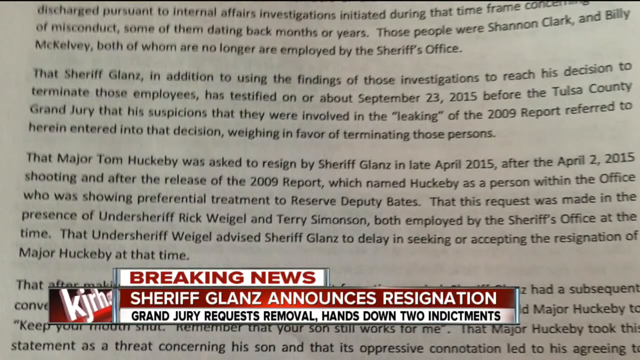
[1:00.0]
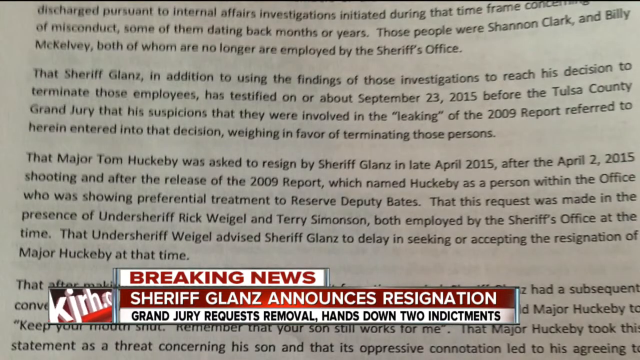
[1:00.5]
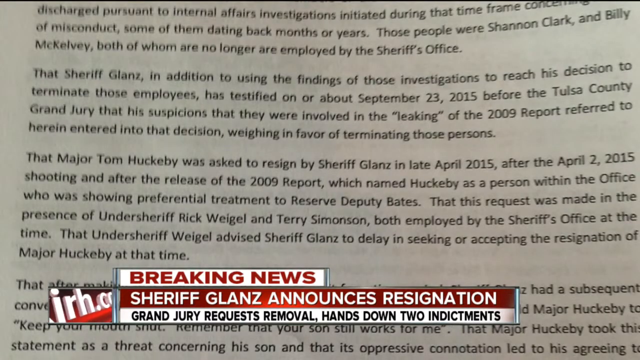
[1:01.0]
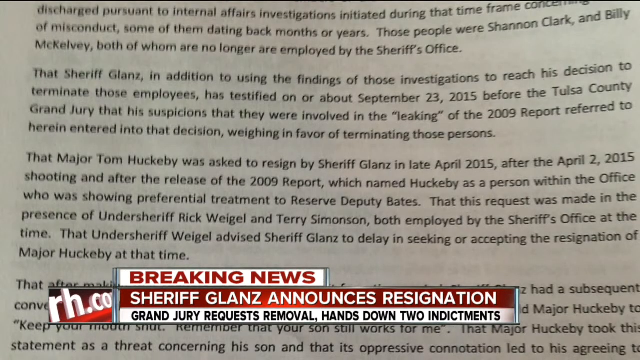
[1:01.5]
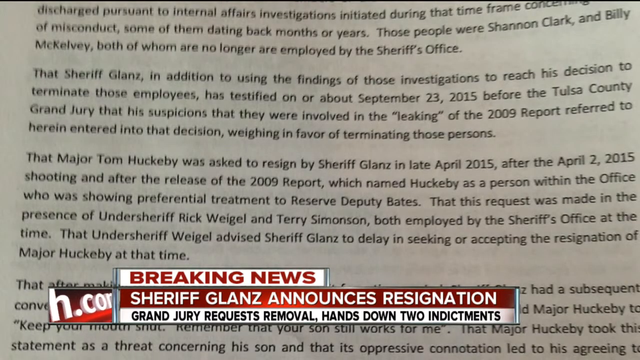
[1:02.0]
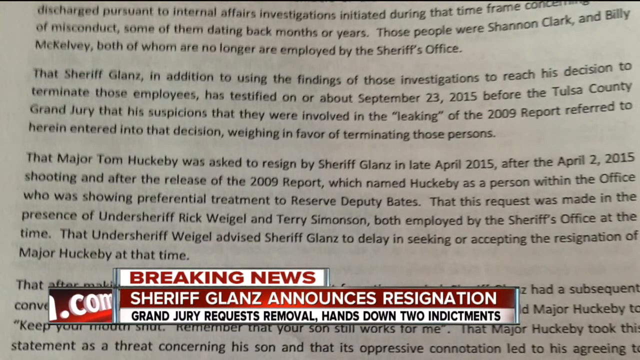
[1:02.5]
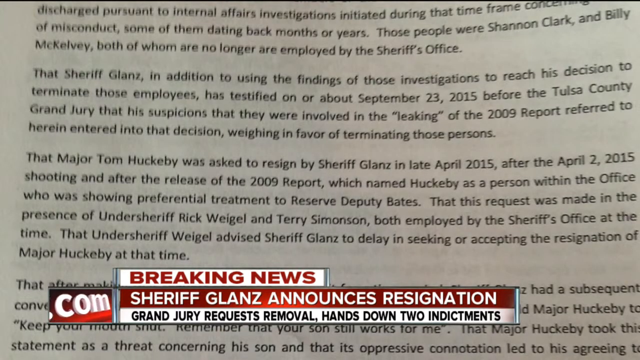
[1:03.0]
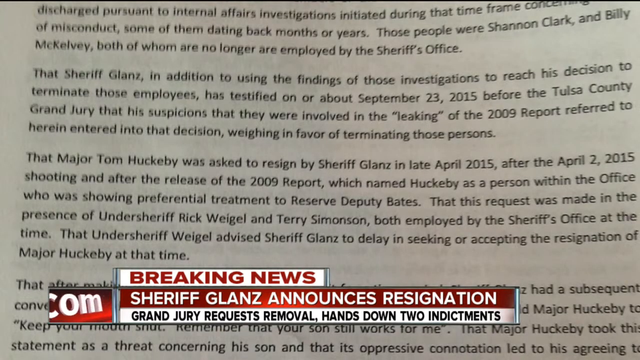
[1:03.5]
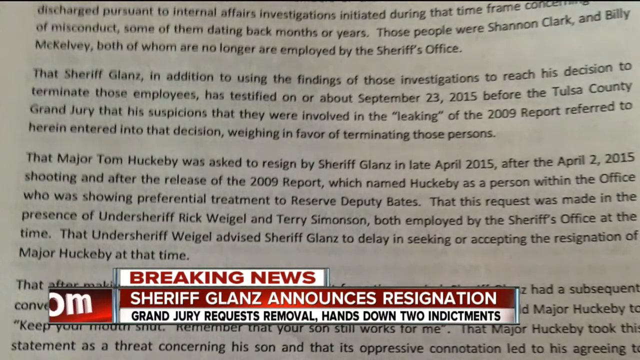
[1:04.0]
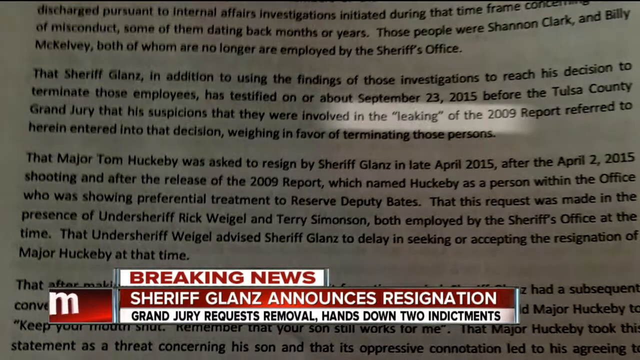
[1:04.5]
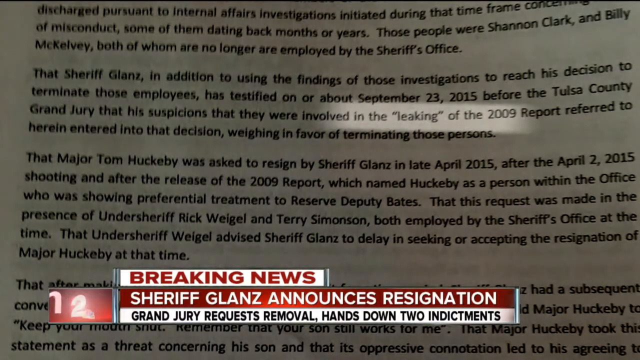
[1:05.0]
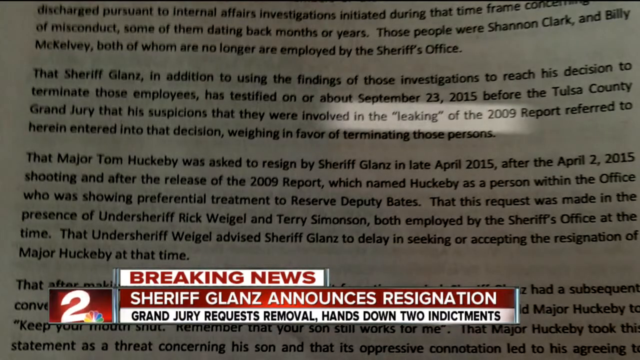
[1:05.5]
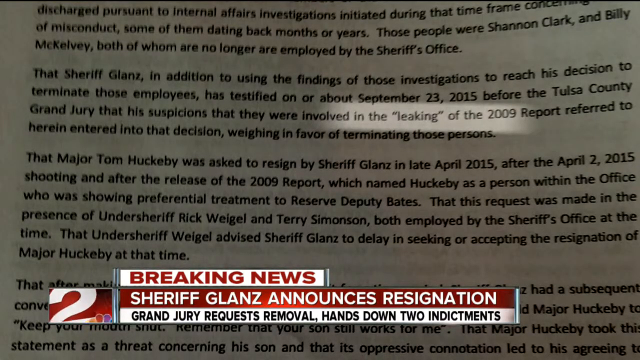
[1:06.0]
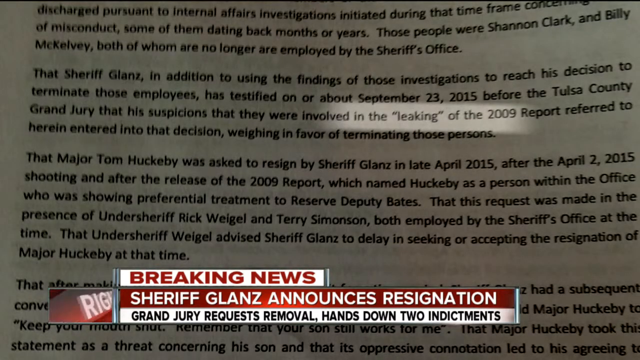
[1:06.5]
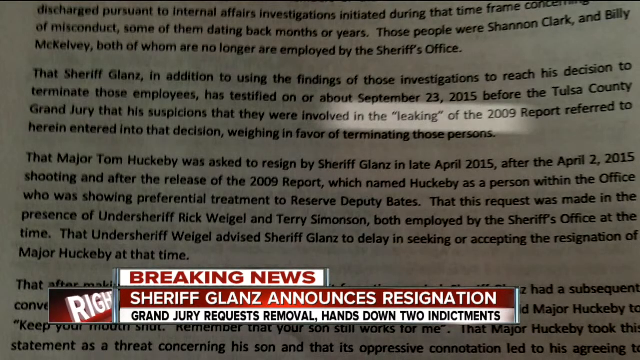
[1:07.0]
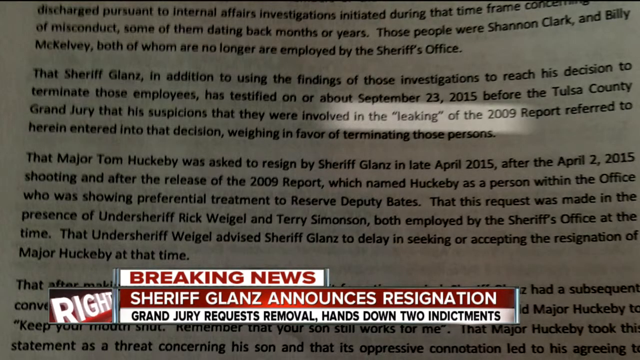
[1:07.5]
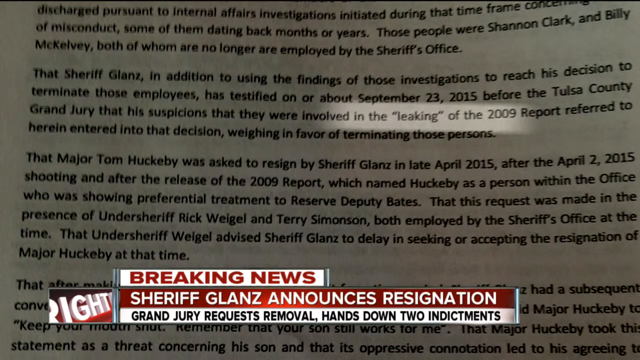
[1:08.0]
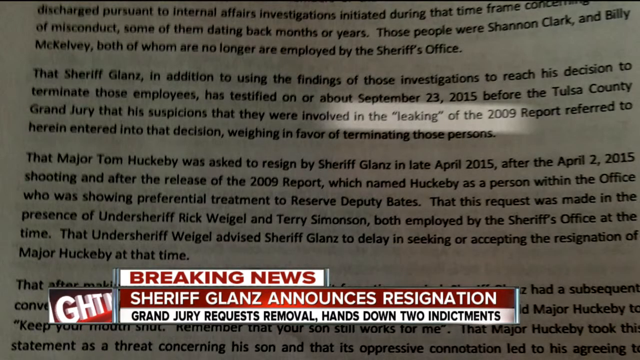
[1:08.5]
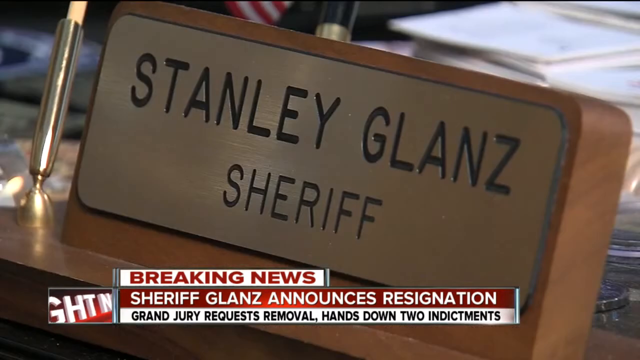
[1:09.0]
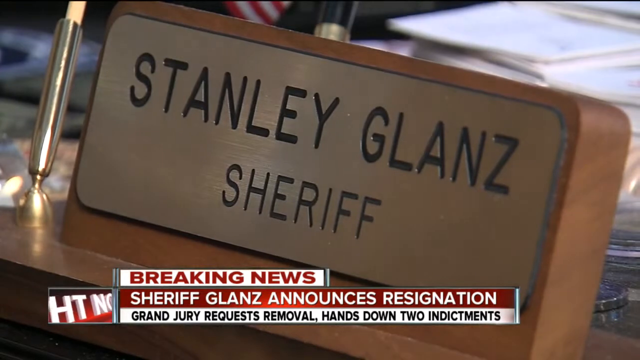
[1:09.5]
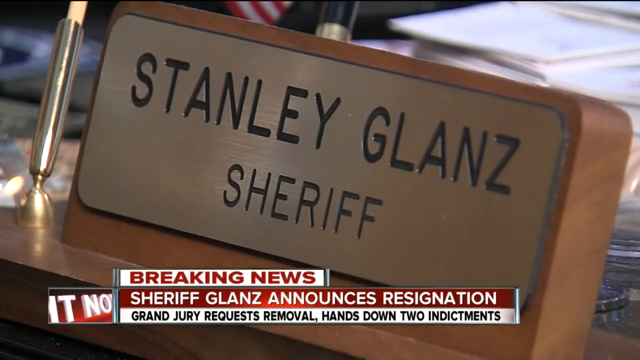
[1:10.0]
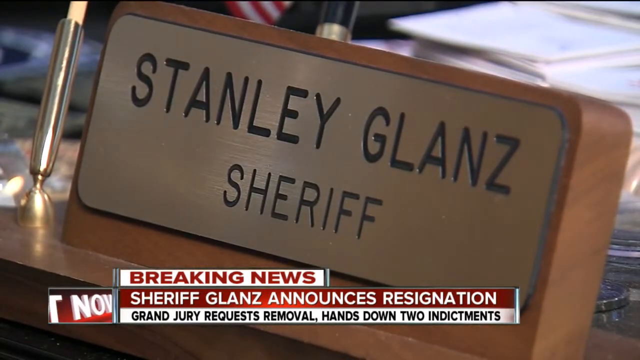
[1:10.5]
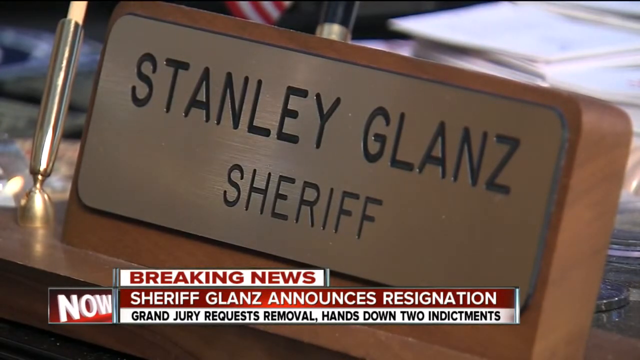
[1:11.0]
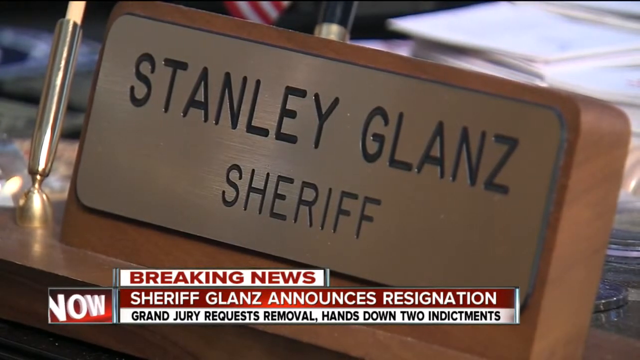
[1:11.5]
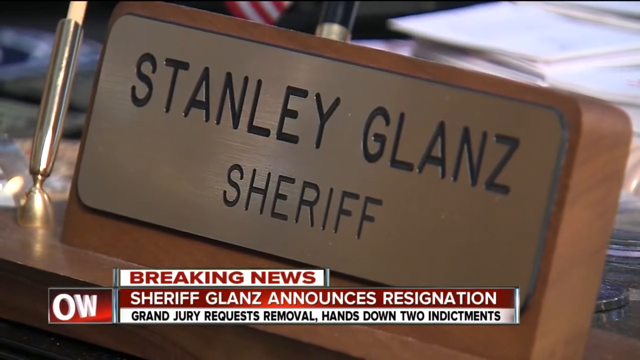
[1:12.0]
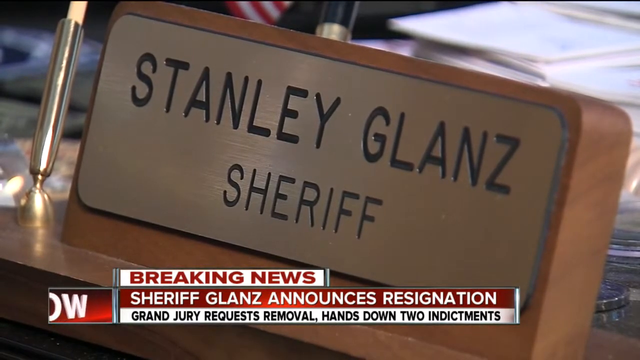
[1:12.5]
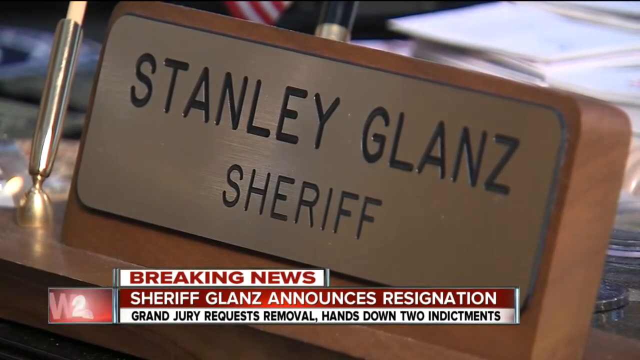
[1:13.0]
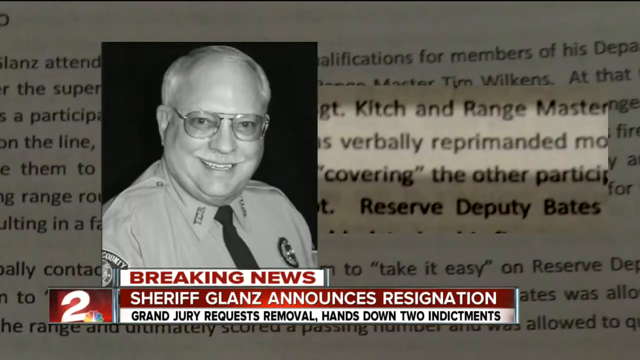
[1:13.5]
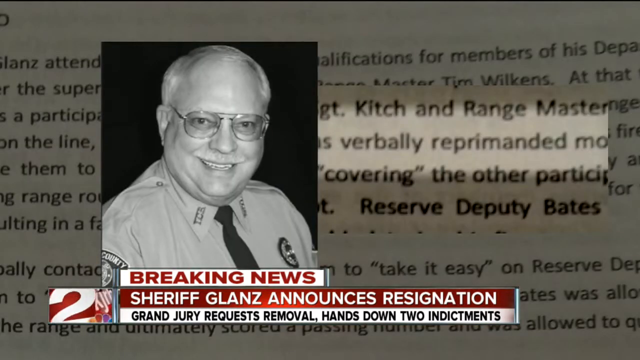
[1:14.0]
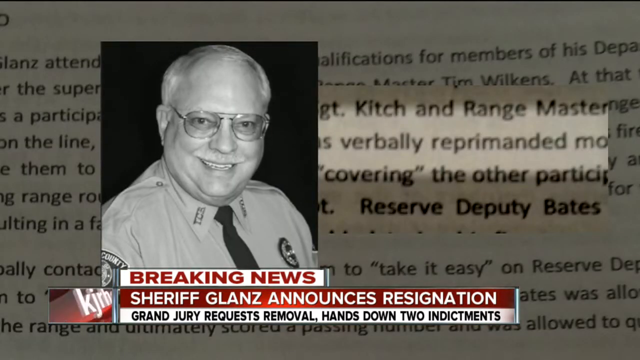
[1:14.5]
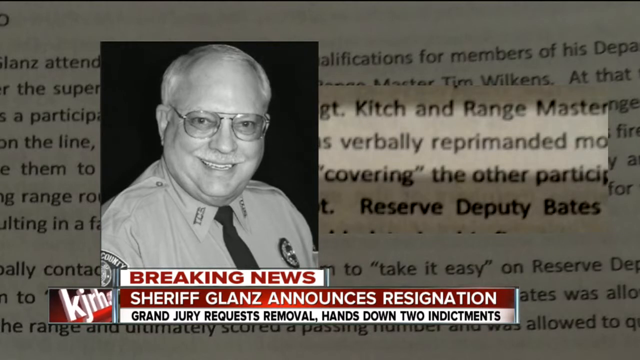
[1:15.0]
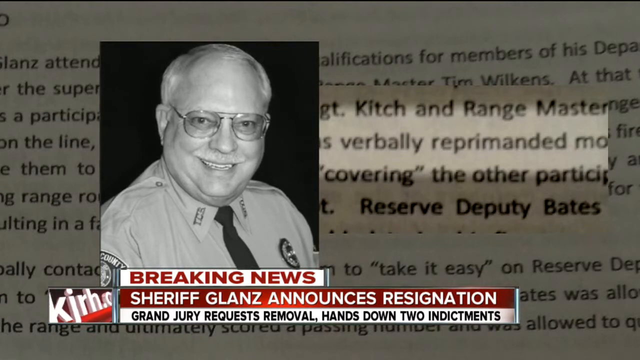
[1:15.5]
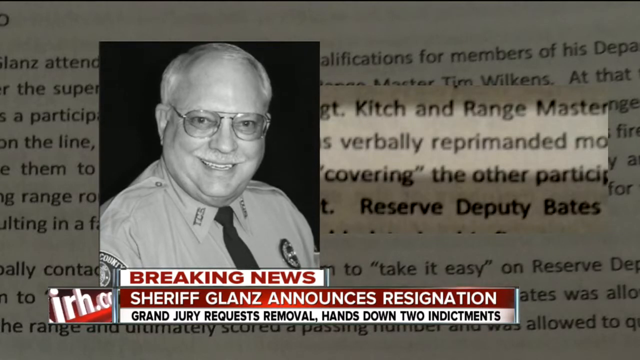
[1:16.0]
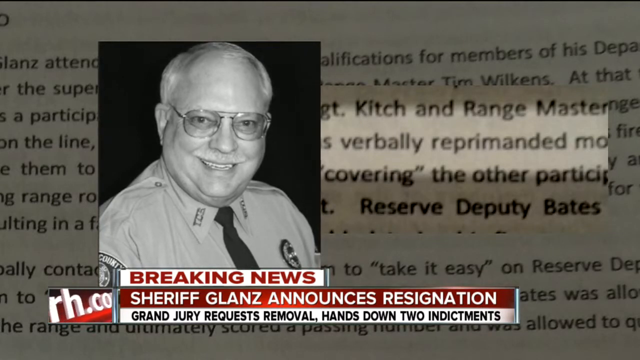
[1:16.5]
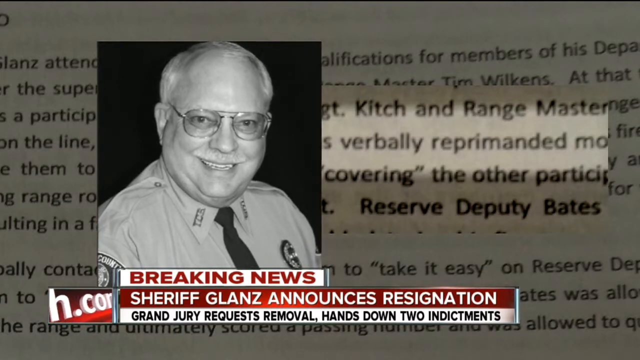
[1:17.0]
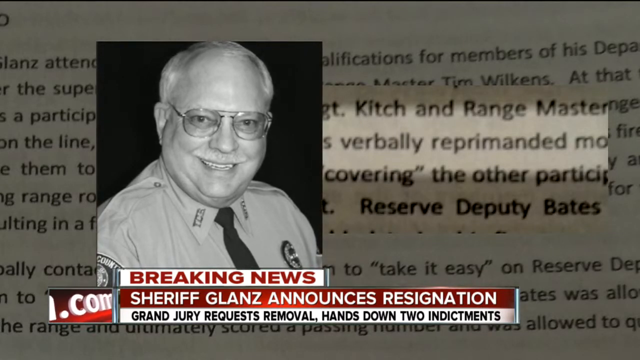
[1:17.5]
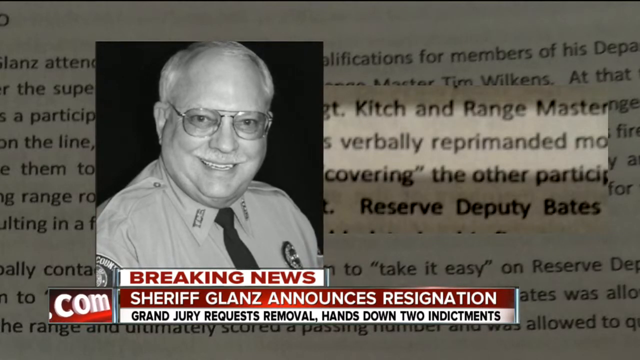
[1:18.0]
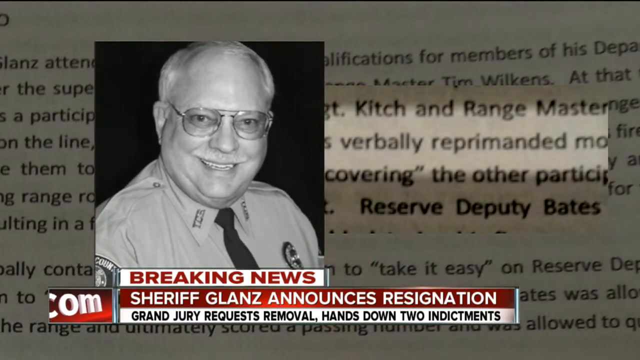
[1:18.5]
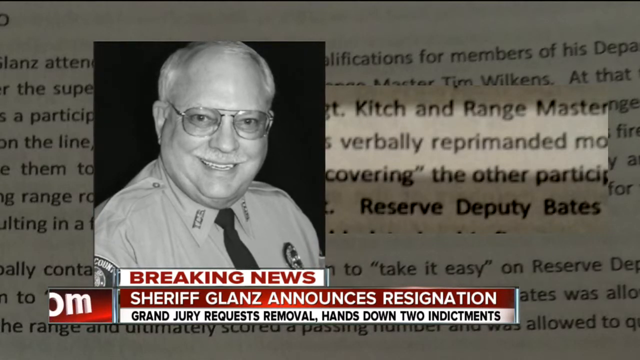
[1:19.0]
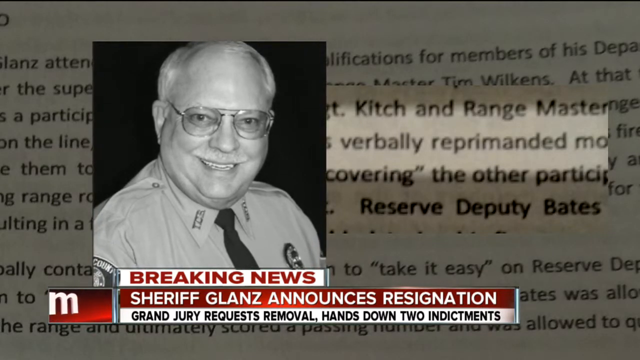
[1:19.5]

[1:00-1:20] Breaking news text at the bottom of the screen reads "Sheriff Glanz announced resignation. Grand jury requests for removal. Hands down two indictments." The camera zooms in on a readable portion of the memo, which includes "discharge pursuant to internal affairs investigations," "misconduct, some of them dating back months or years," "Those people were Shannon Clark and Billy McKelveyy. Both of them are no longer employed by the Sheriff's office," and "That Major Tom Huckeby was asked to resign by Sheriff Glanz in late April, 2015 after the April 2nd, 2015 shooting and after the release of the 2009 report, which named Huckeby as a person within the office who was showing preferential treatment to Reserve Deputy Bates." The memo also mentions Undersheriff Rick Weigel and Terry Simonson. The video transitions to a zoomed-in nameplate on a desk that says "Stanley Glanz, Sheriff," and then to an image of an elderly man in a Sheriff's Department uniform.